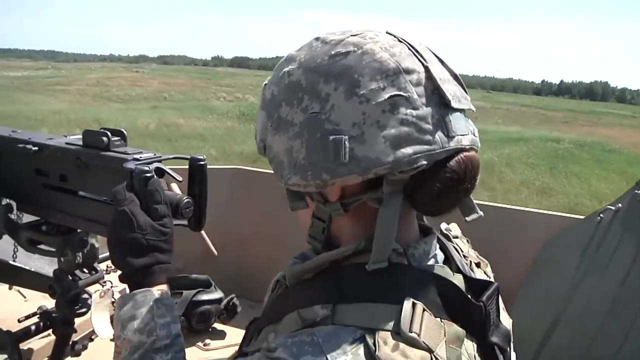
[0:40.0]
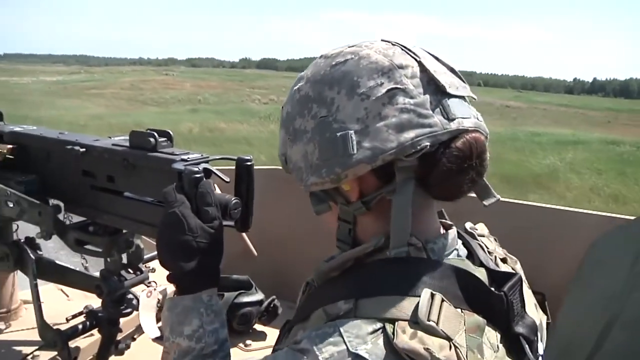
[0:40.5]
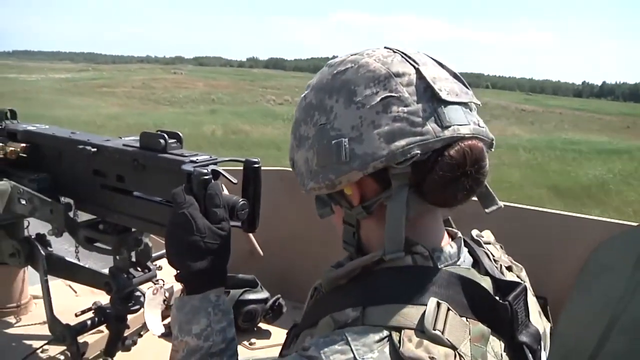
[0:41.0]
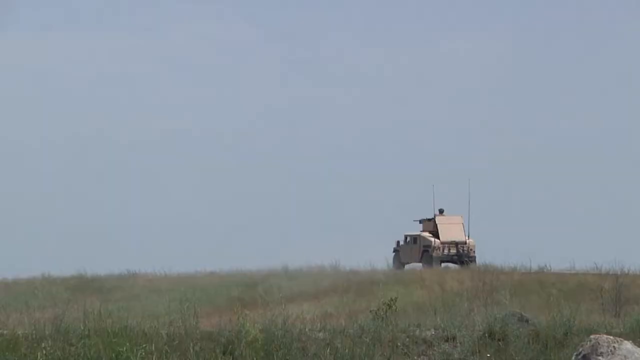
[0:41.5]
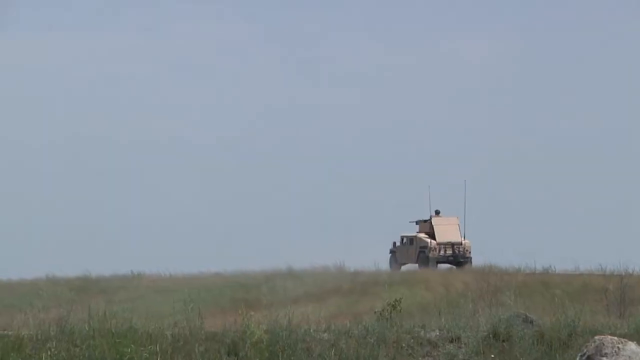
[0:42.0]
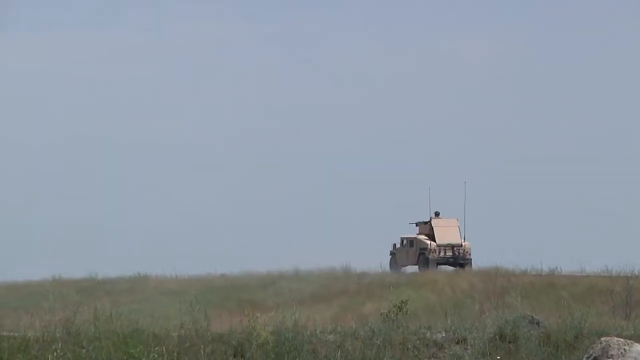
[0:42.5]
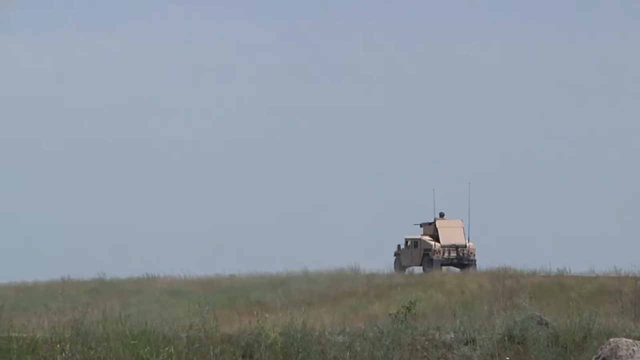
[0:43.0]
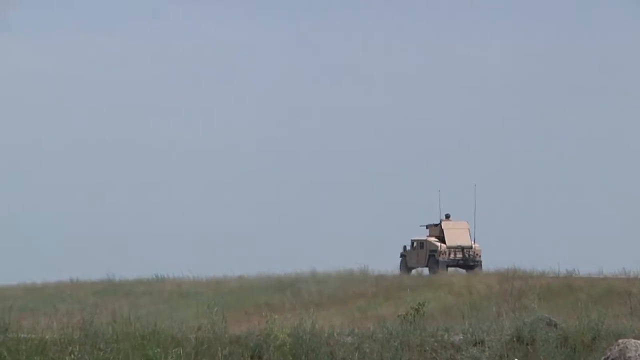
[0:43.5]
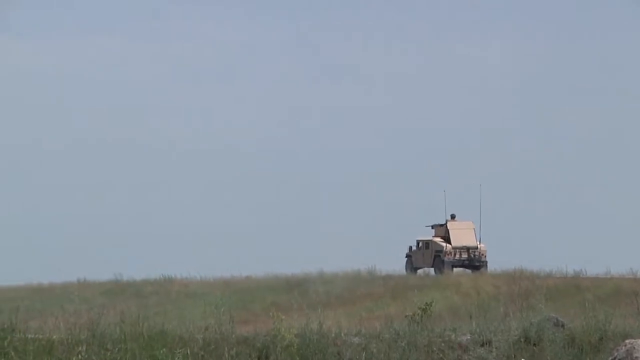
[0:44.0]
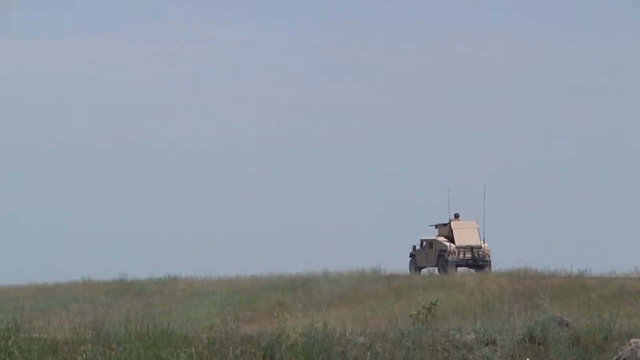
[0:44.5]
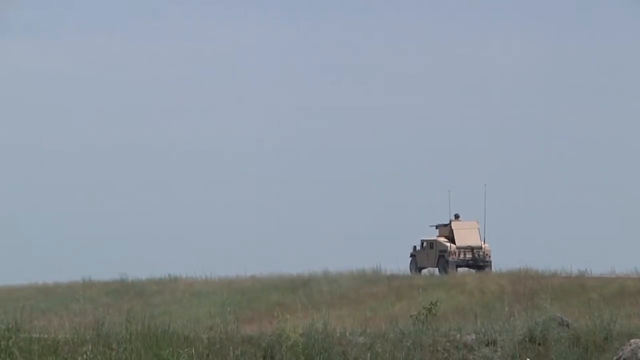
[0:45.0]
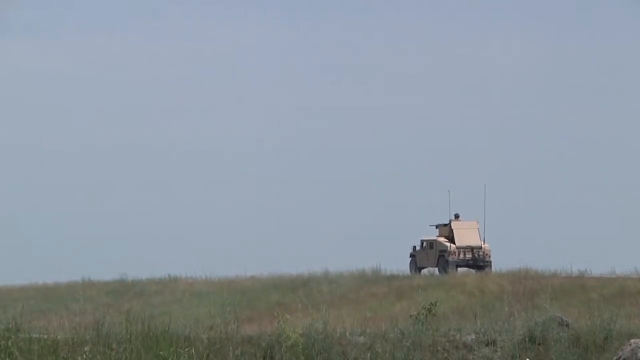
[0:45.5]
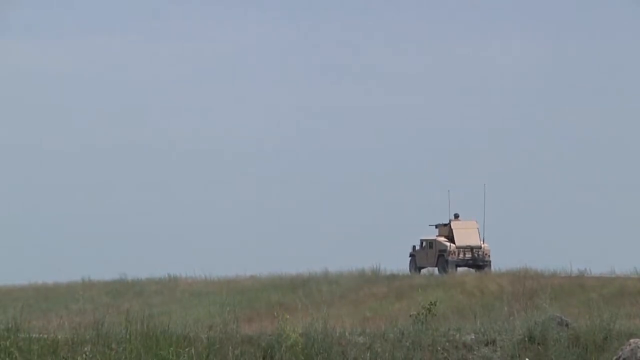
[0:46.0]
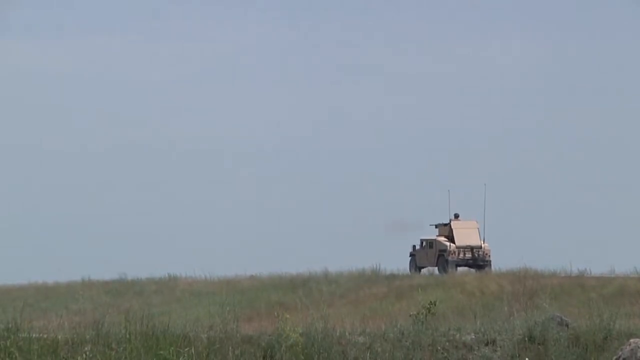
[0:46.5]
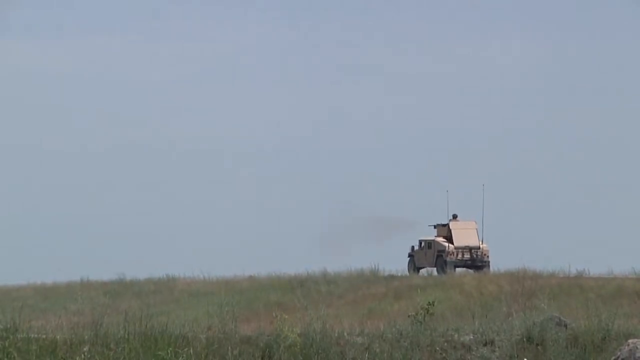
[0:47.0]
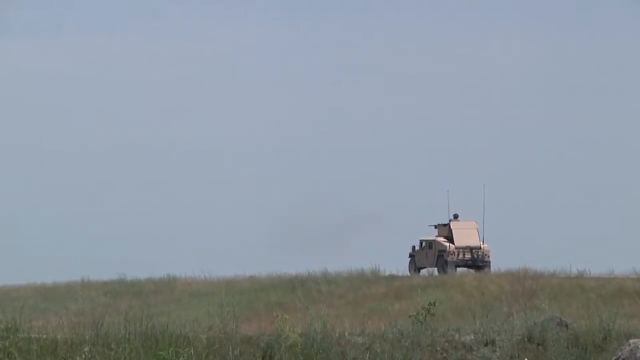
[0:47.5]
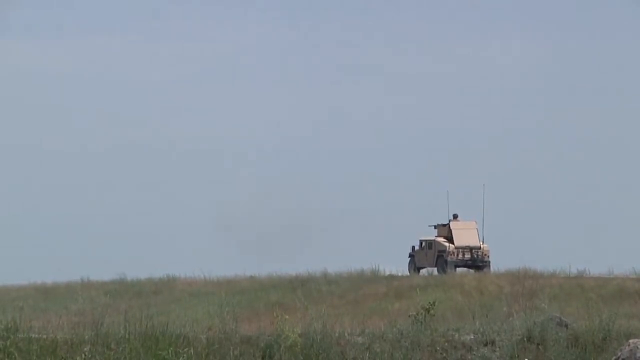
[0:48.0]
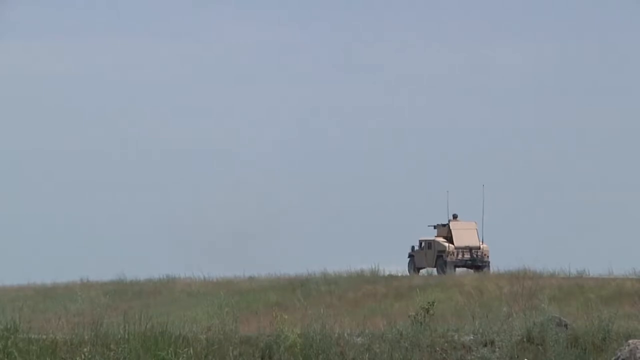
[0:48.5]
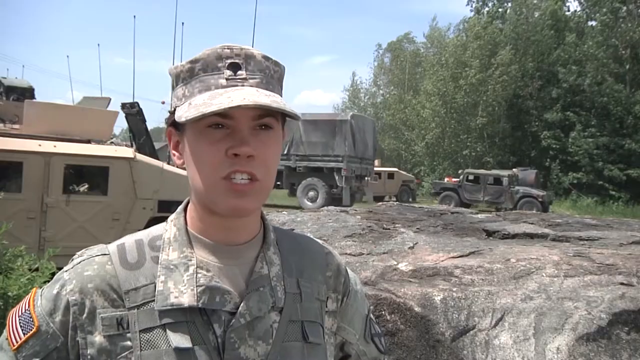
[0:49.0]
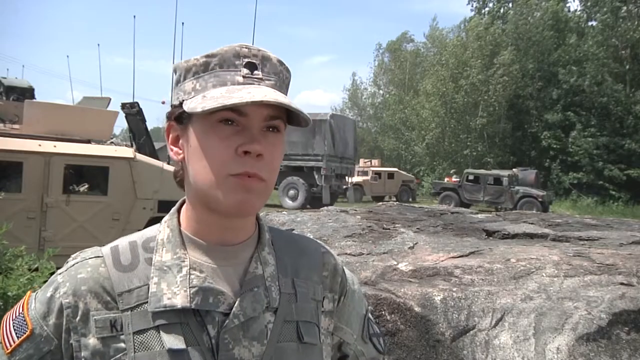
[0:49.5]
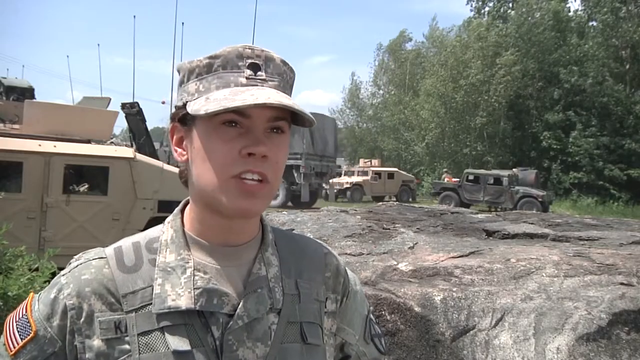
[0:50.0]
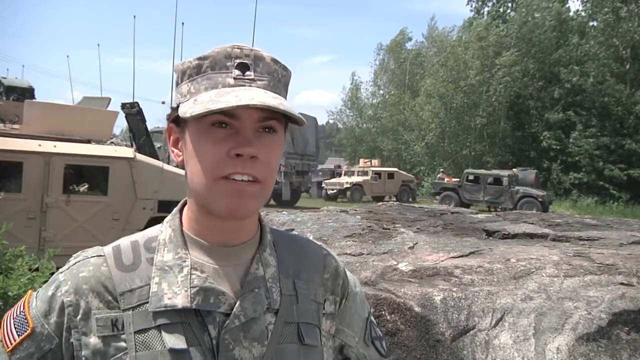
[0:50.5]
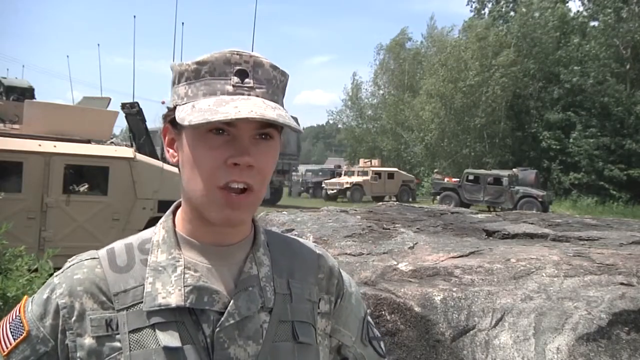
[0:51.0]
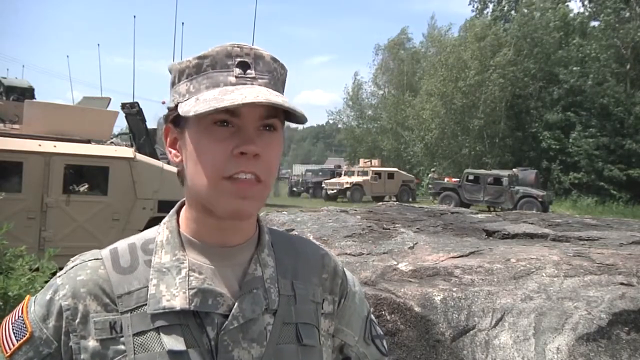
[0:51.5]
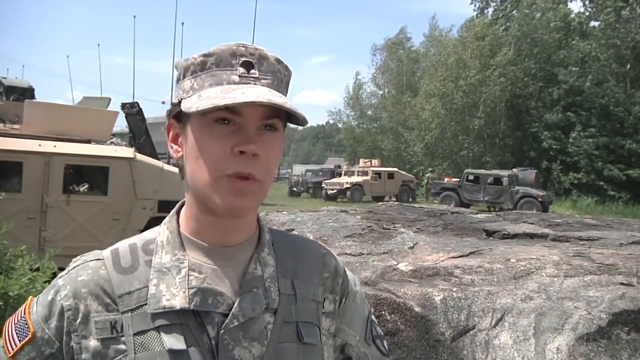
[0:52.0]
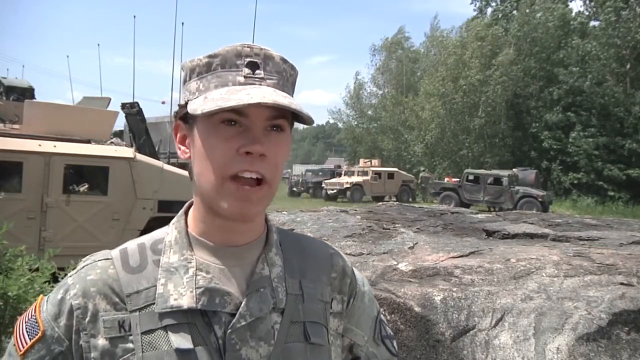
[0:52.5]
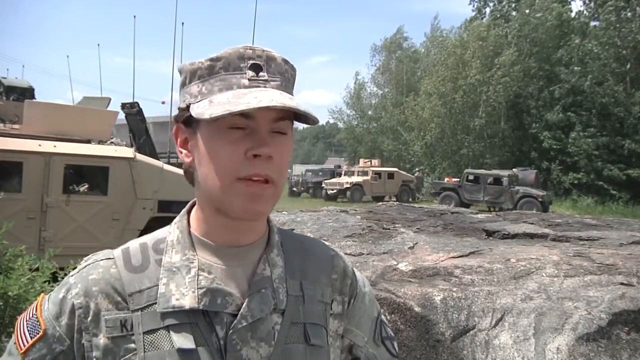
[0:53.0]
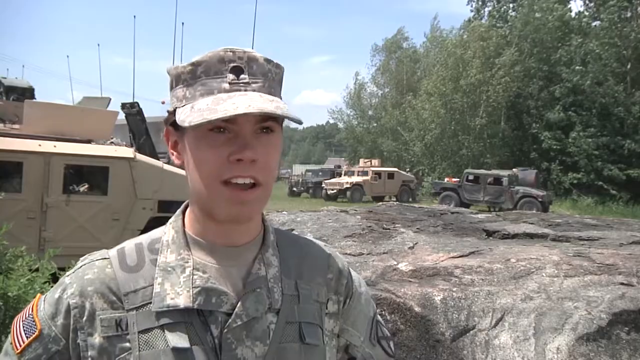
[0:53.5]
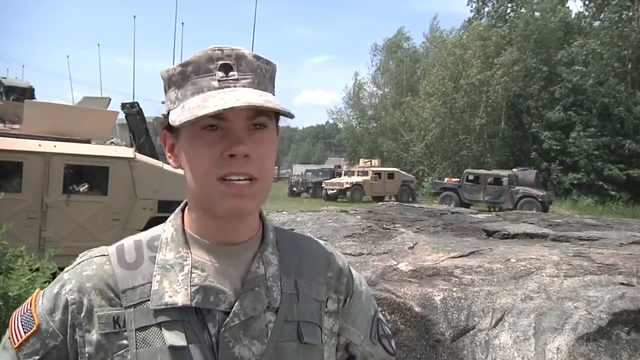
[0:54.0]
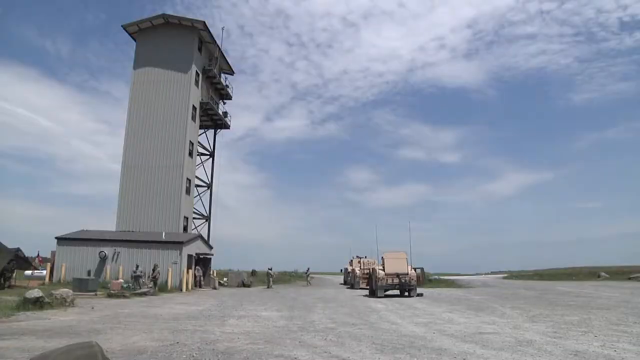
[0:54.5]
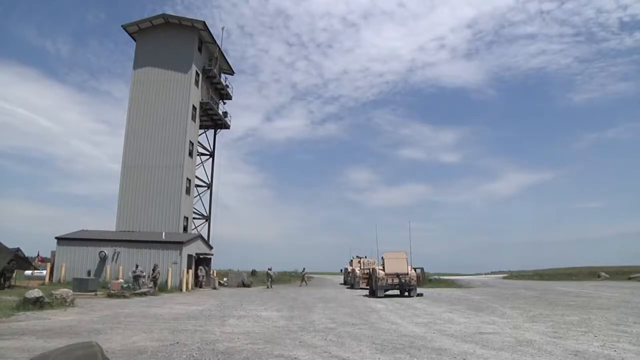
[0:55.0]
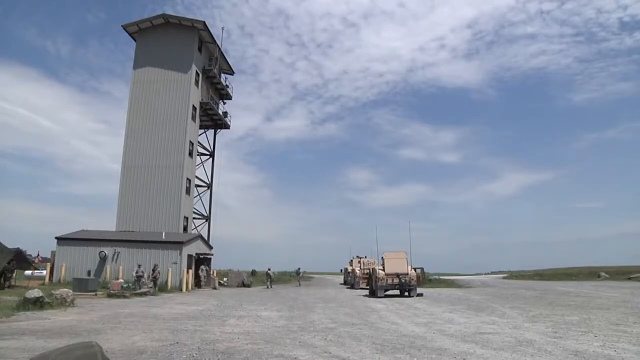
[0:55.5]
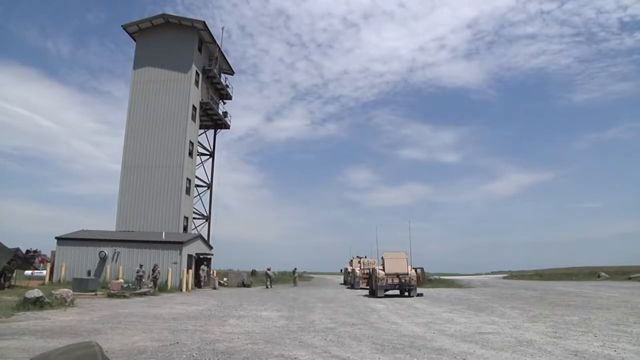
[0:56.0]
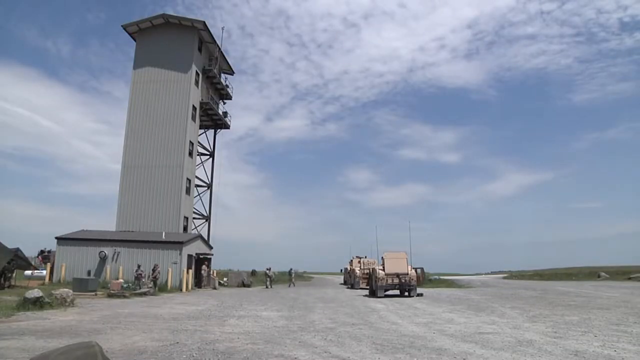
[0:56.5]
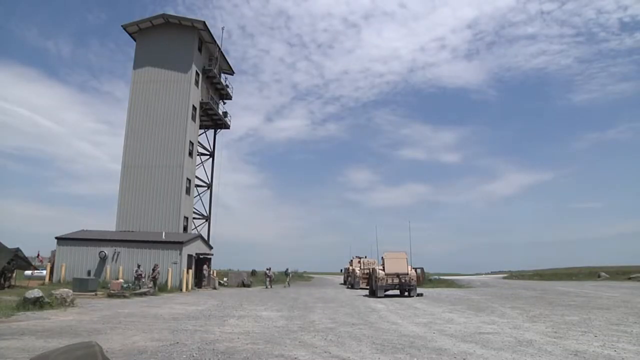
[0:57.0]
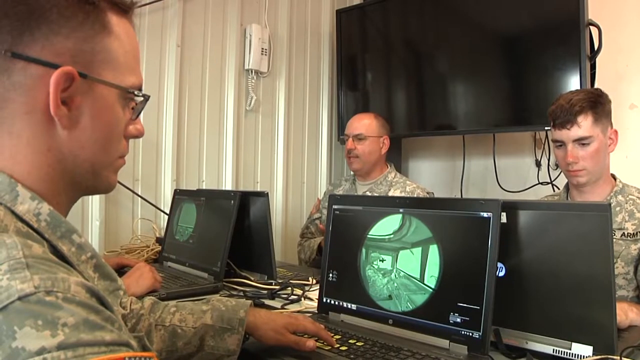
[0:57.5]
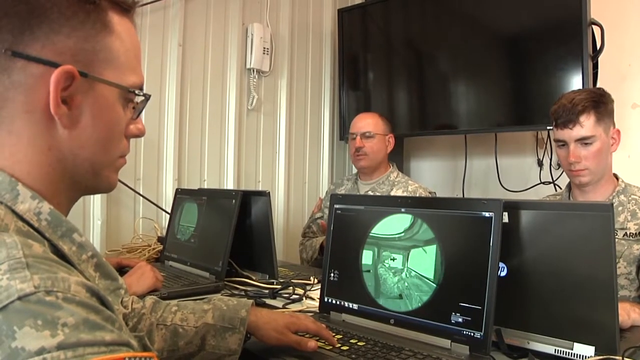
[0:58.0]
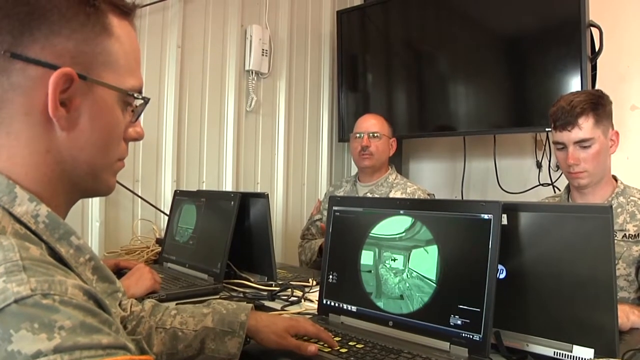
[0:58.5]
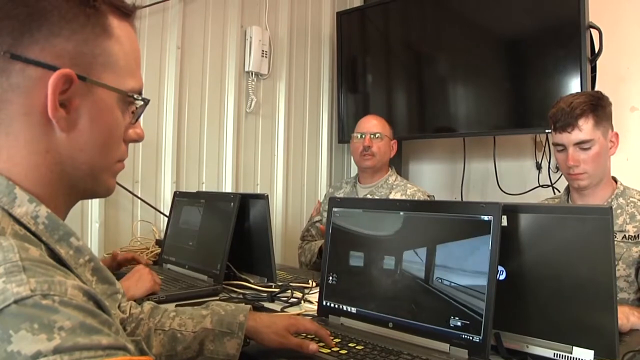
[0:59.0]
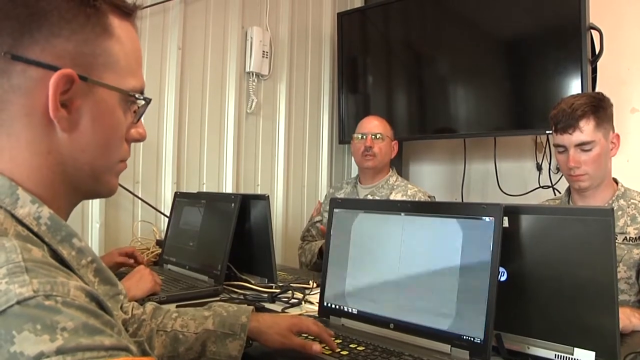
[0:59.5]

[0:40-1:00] A soldier who looks like a female soldier, judging by the hair, is getting ready. The view moves outside, revealing that the vehicle is not a tank but an army vehicle that looks like a Hummer. Seen from afar, it moves toward clear ground and stops briefly, possibly firing, as smoke comes out in front of the gun. Next, a soldier who looks like a female soldier, wearing full military gear with a badge on the shoulder that says "US," speaks to the camera. The scene changes to what looks like a building used for scouting threats before they get close to the base, and two or three vehicles are moving in one direction. Inside, probably in these buildings, there is surveillance equipment, and military personnel are looking at screens showing video of the soldiers. The shot ends on empty bullet shells.